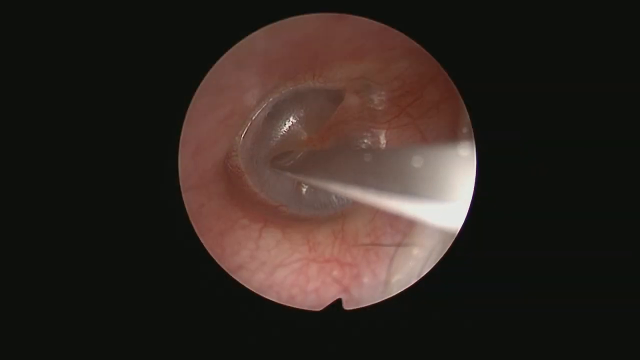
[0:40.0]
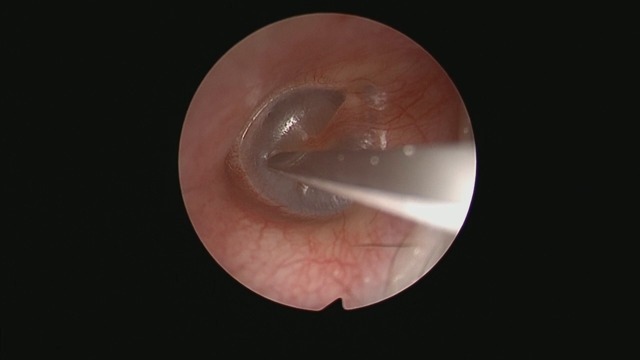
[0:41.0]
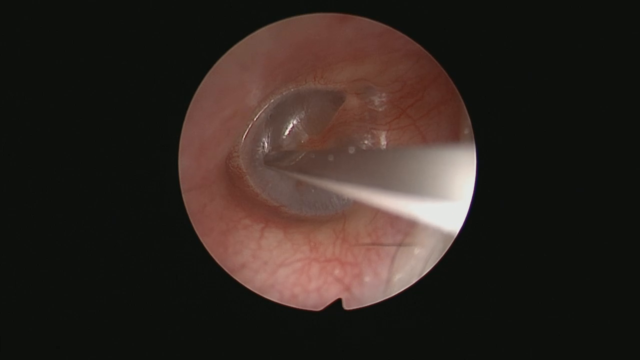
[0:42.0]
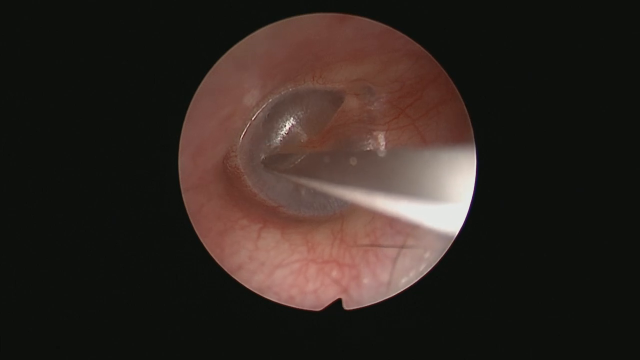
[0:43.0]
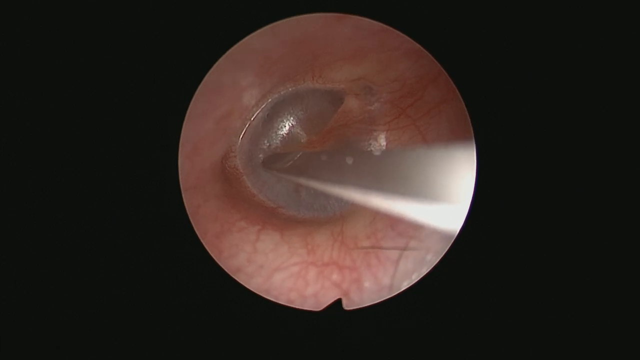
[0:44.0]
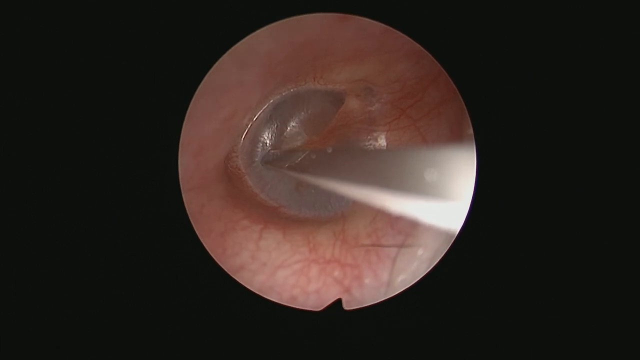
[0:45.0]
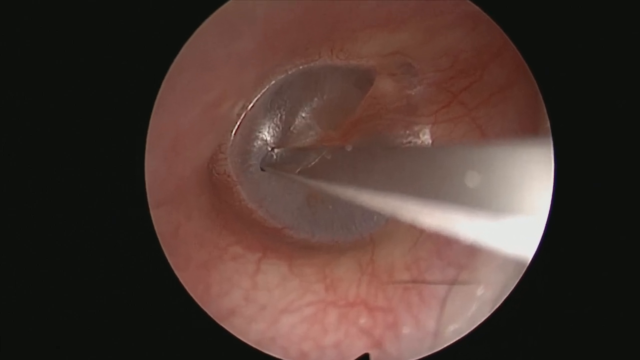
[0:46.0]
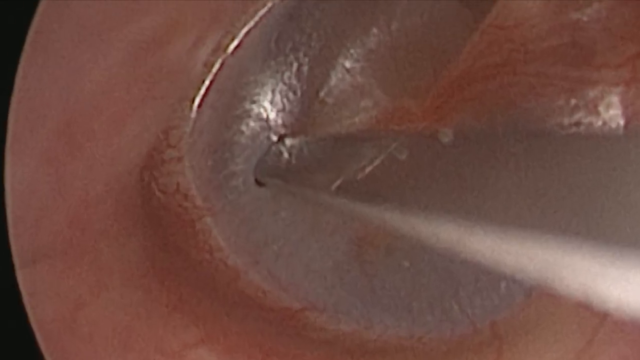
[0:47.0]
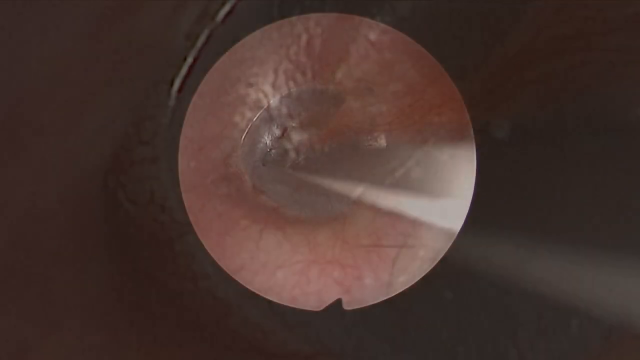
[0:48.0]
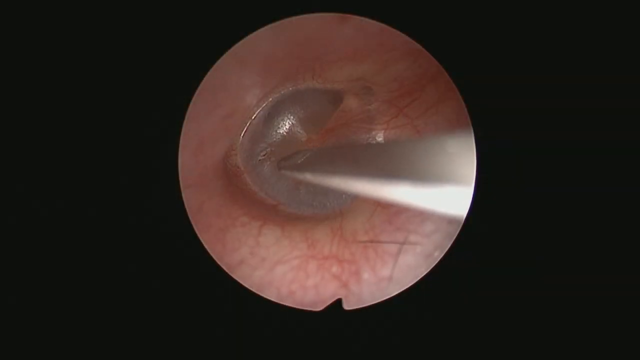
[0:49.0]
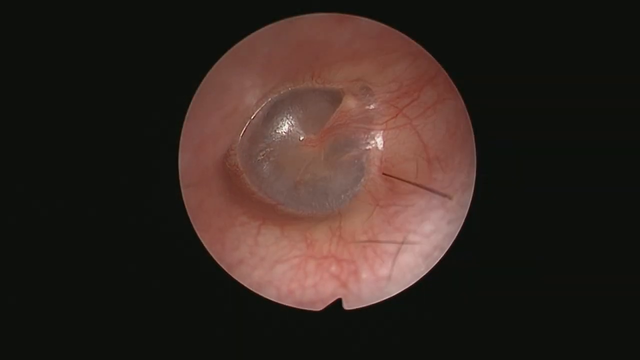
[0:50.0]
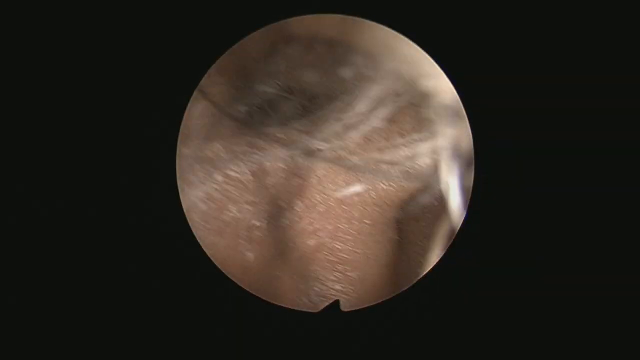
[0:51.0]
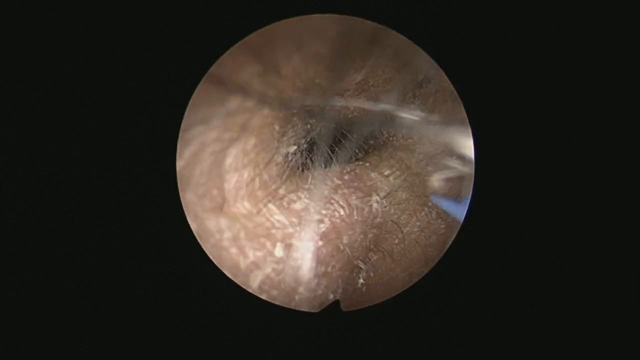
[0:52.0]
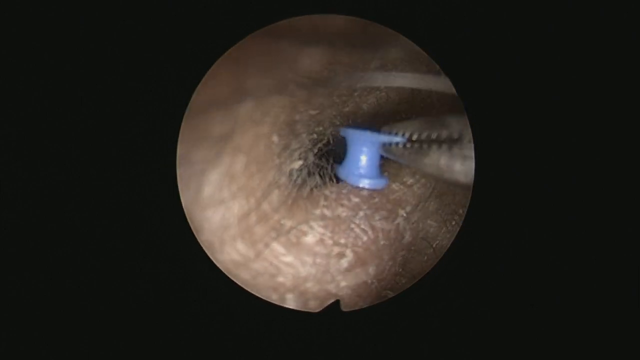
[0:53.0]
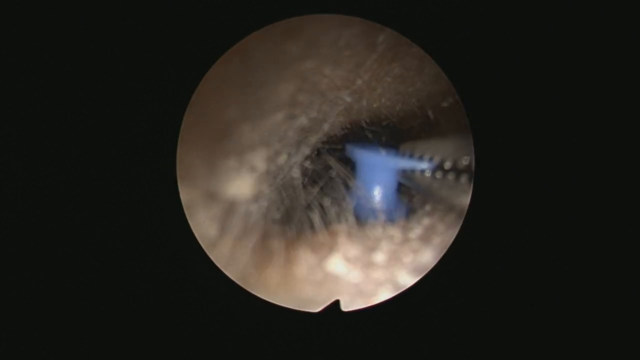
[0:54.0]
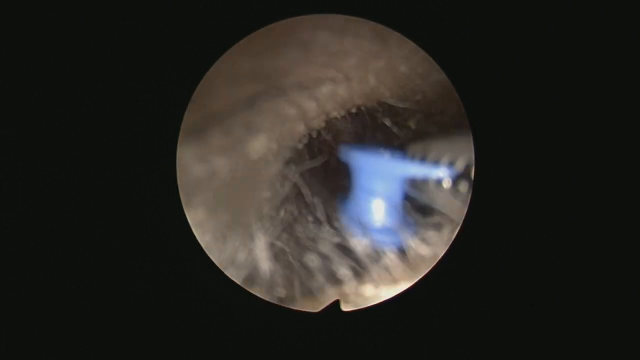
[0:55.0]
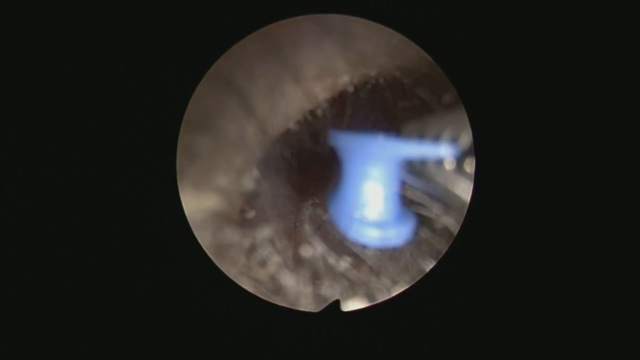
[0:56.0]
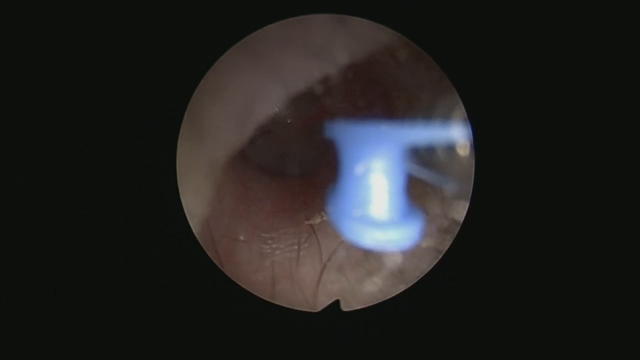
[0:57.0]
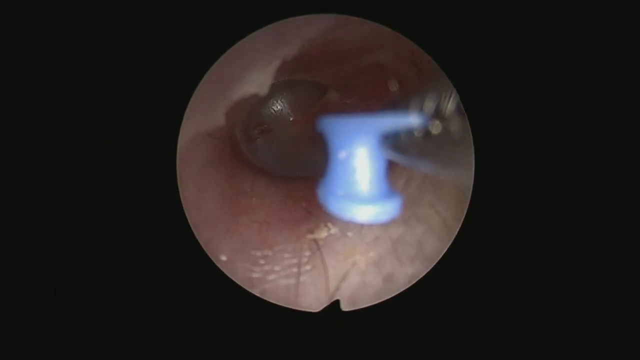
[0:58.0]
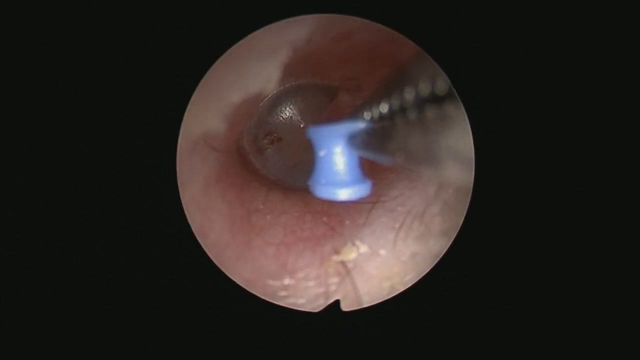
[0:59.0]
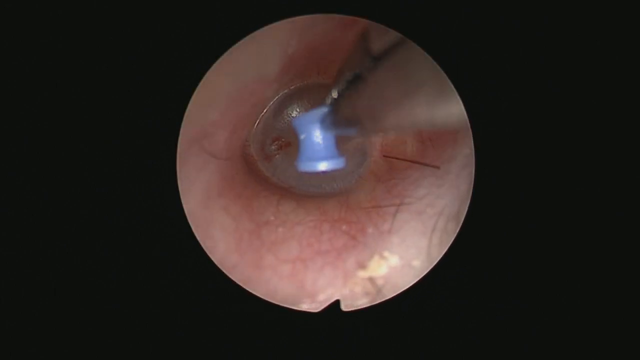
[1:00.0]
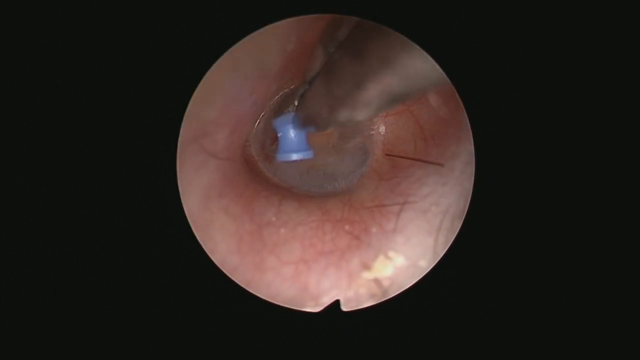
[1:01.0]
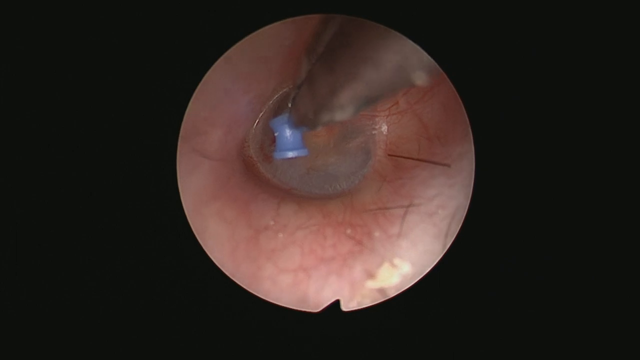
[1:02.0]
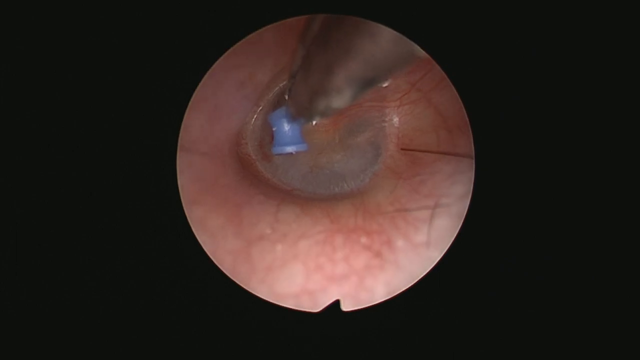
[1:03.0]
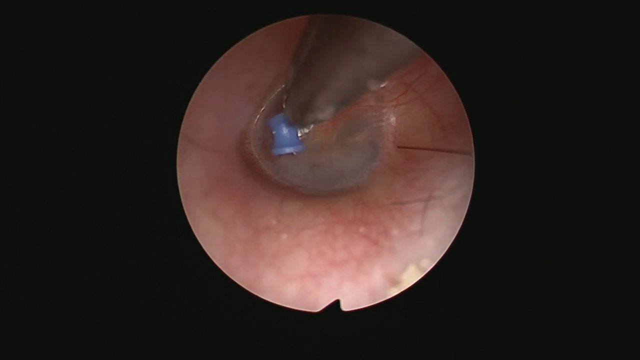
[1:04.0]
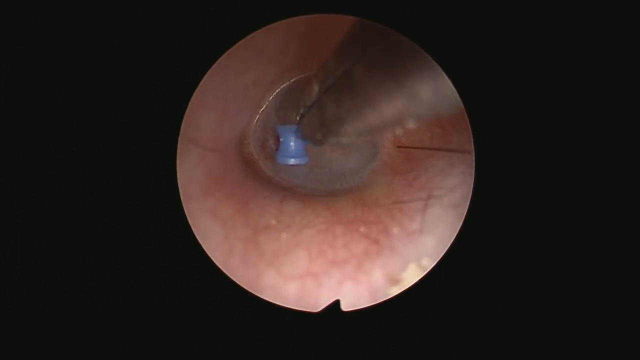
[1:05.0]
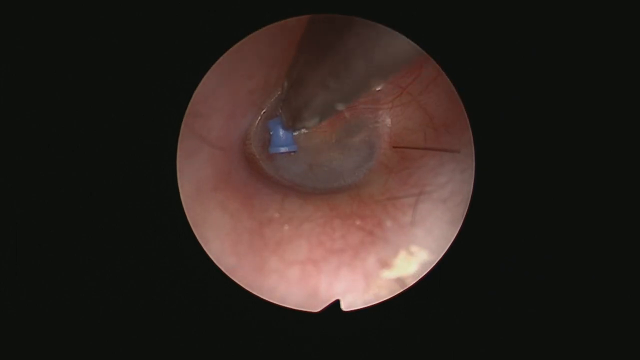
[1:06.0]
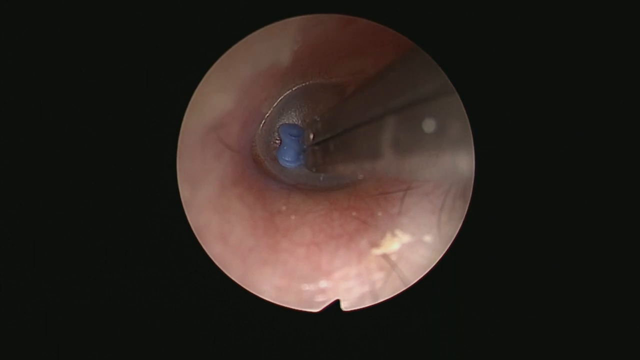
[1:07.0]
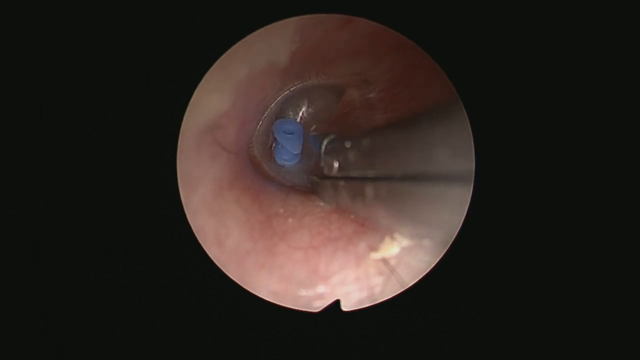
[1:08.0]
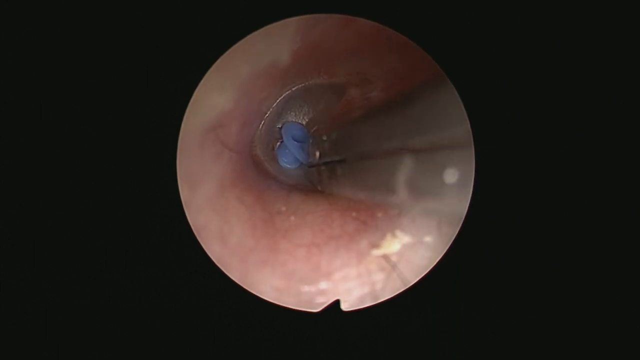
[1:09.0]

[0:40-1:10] A very tight view shows the sack growth in the ear with a piece of surgical equipment touching it. What appear to be bubbles move along the metal equipment as it touches the sack, and the metal device makes a puncture in the sack. The camera then moves out, and a different tweezer-like device with grips on it goes into the ear with the grommet. The grommet is pushed into the sack and moved around. Little bubbles appear, as though some fluid is moving, perhaps where the sack has released fluid.